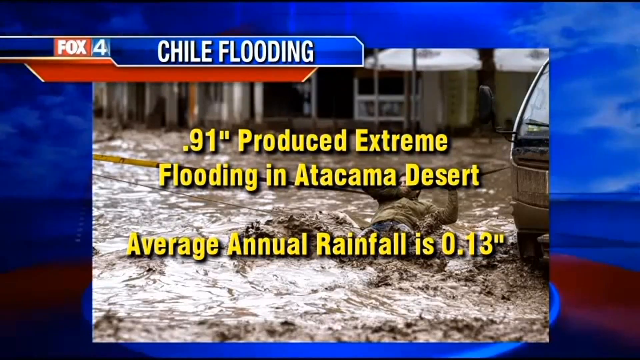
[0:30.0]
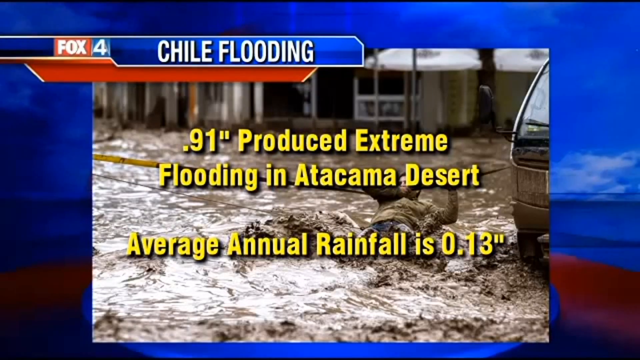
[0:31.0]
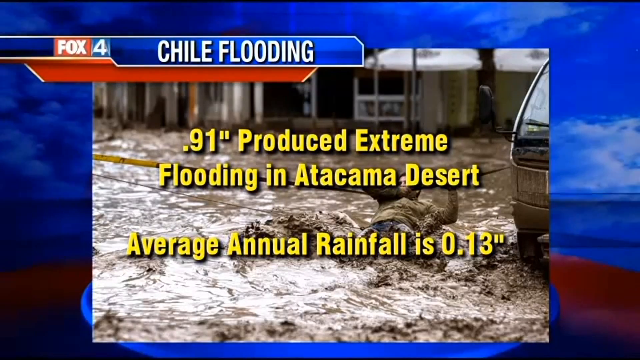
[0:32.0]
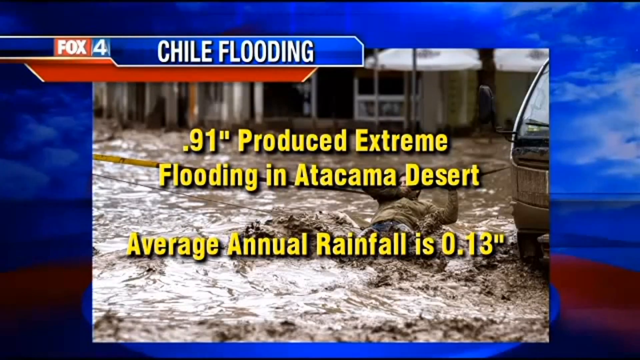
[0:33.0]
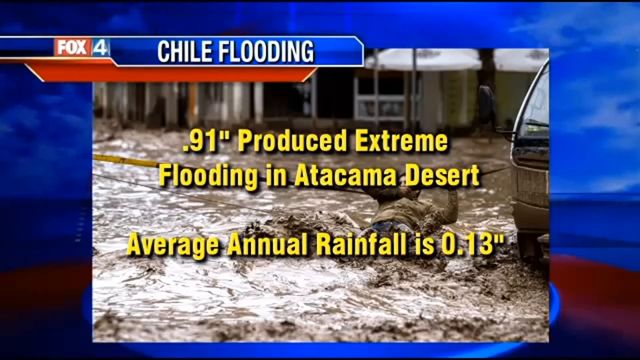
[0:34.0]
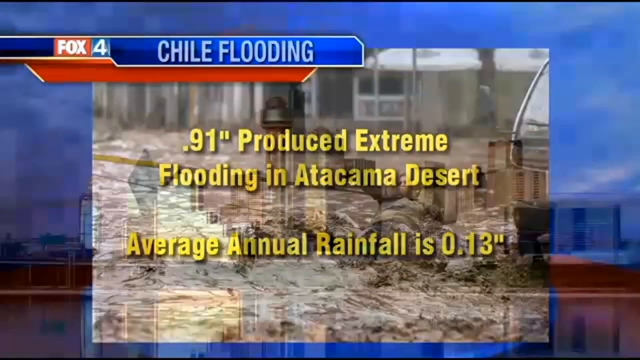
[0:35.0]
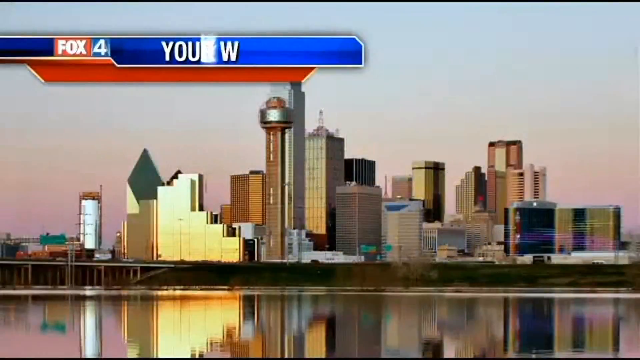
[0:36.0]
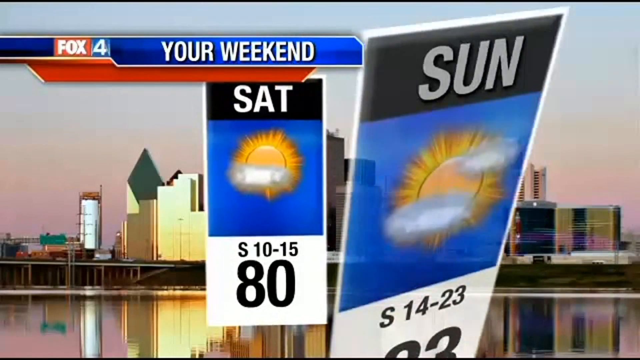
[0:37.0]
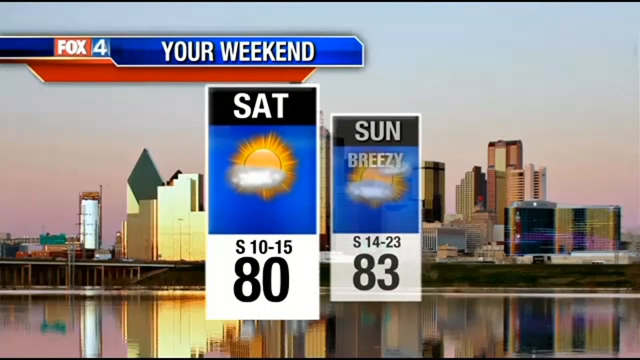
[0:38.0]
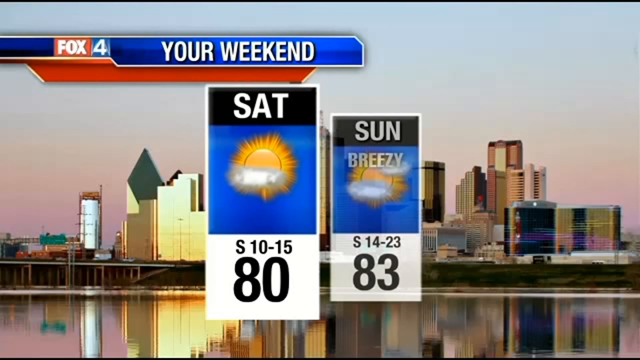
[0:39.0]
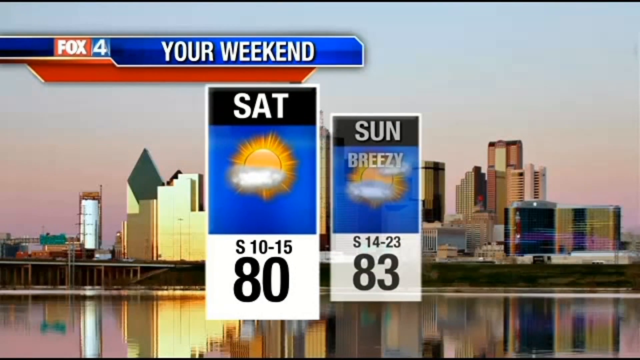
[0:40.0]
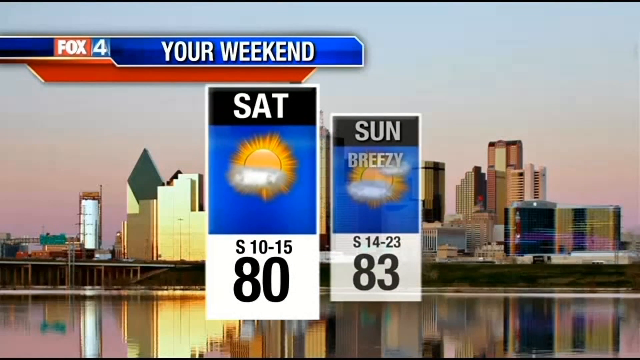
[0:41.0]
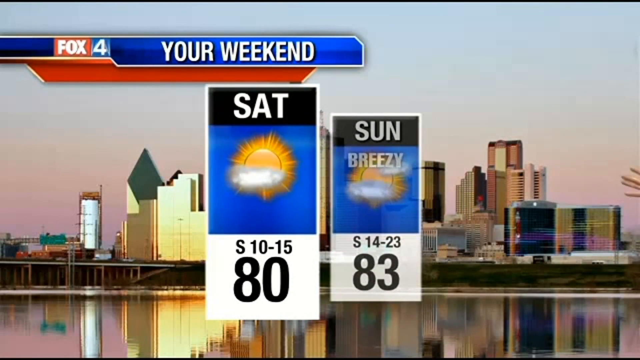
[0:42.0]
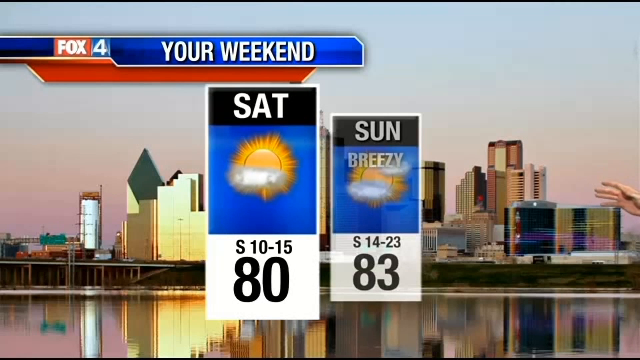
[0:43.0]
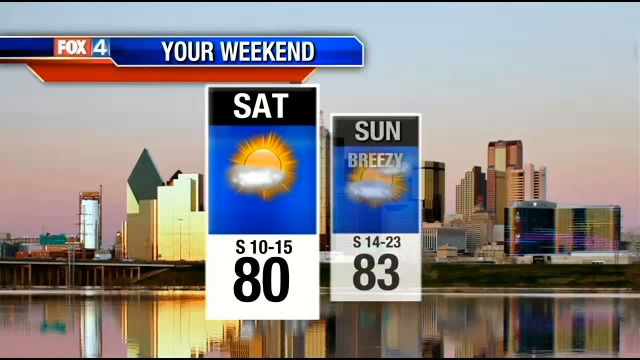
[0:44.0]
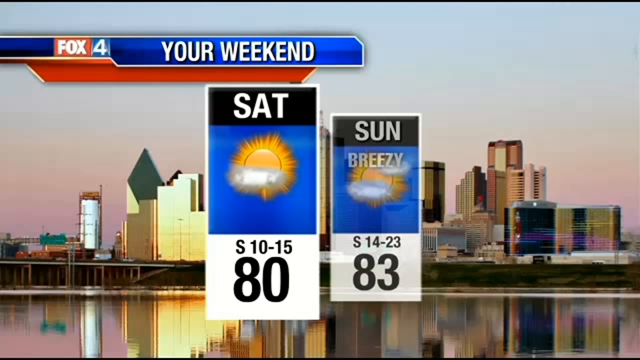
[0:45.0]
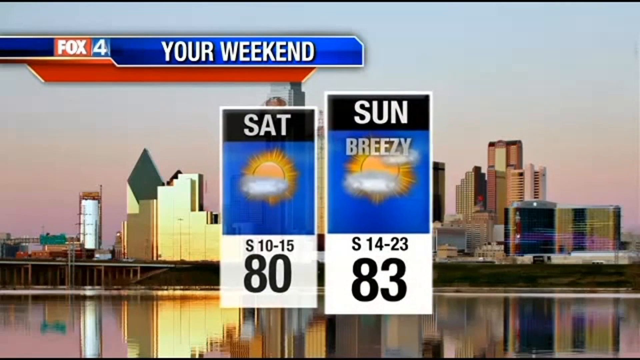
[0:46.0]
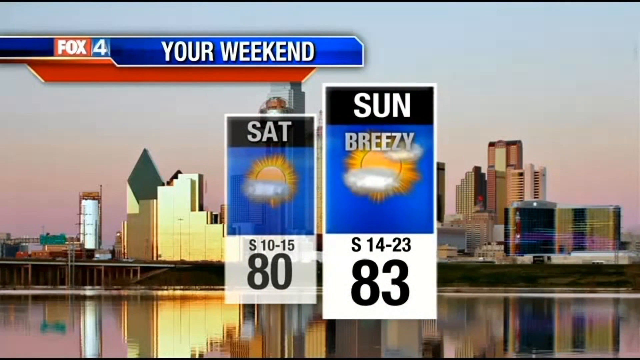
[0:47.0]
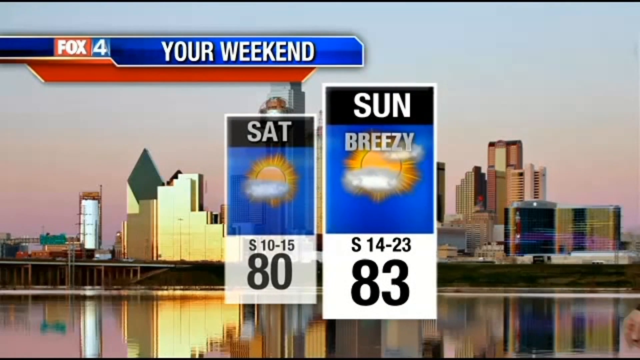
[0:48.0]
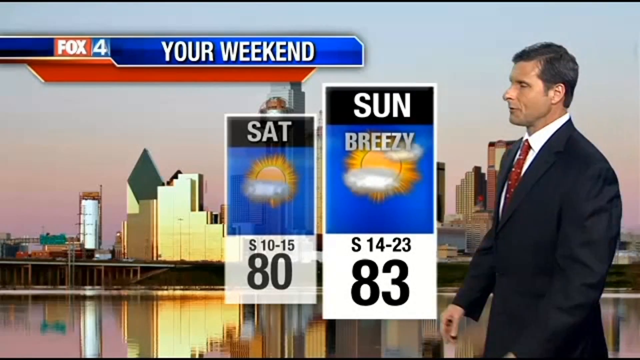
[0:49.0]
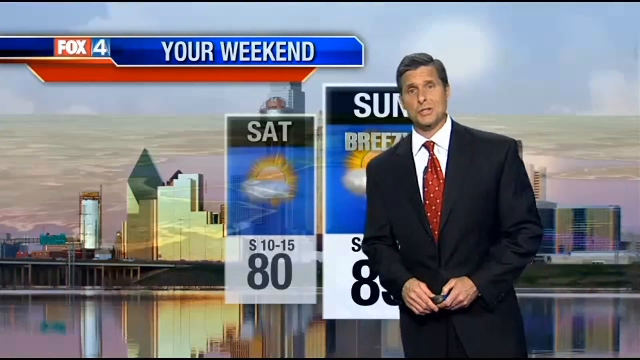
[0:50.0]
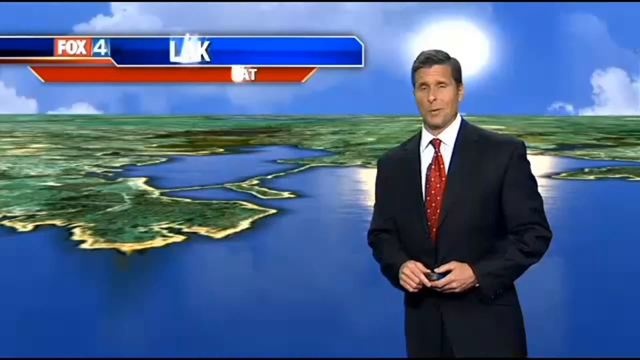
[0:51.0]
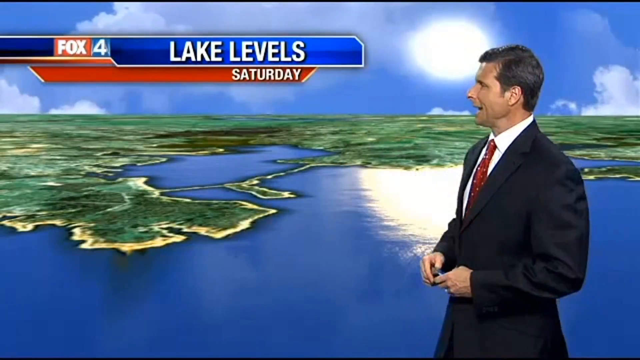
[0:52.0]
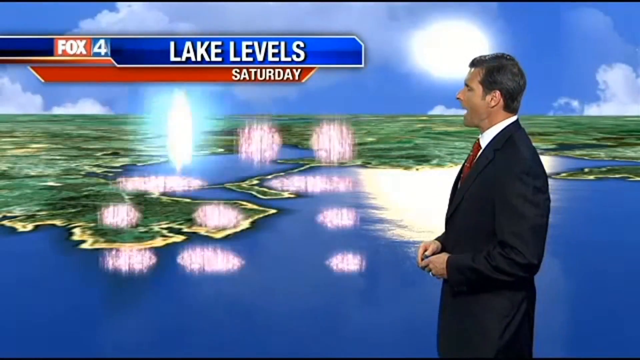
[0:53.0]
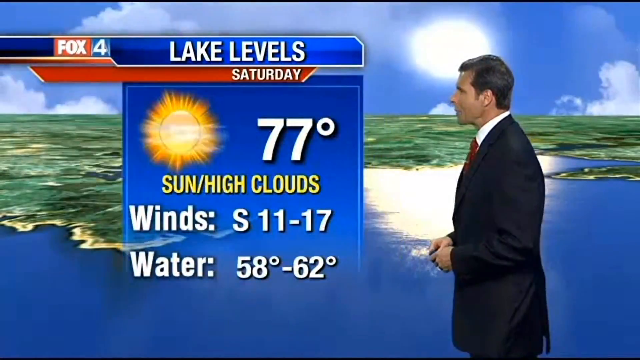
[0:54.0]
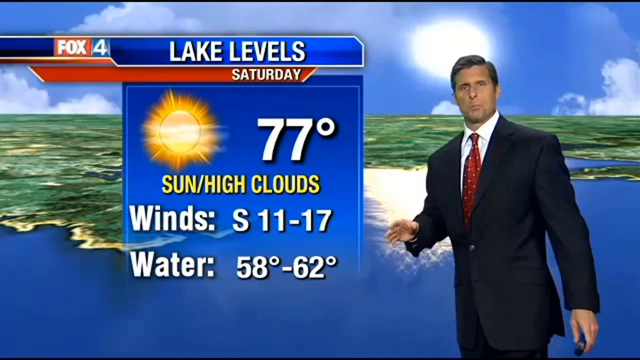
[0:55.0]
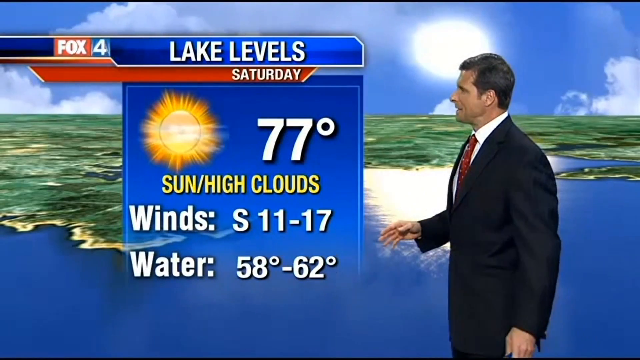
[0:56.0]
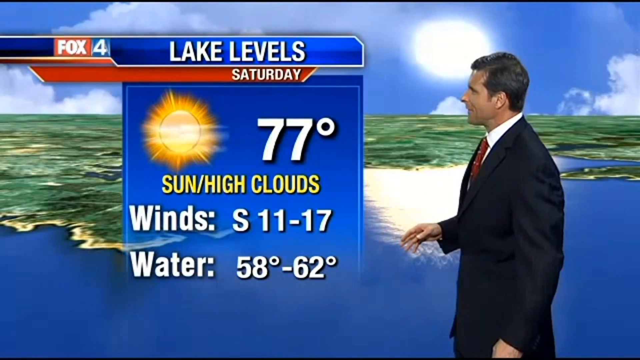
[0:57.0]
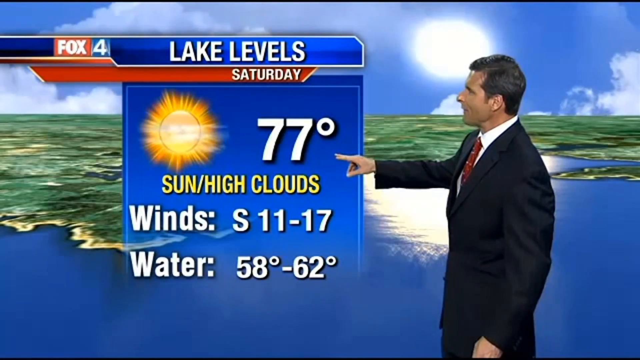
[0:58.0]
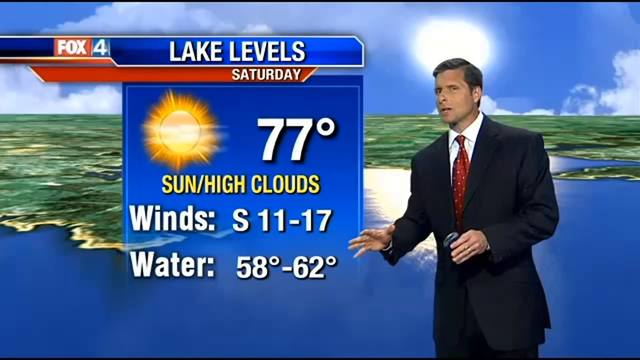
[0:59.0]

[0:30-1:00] An image appears to show a flood. A rope seems to be attached to some kind of van on the right side and extends all the way to the left, continuing past the left edge of the screen. A guy hangs from the rope as floodwater comes down; the water looks muddy and dirty, half of his body is immersed in it, and he looks completely covered in dirty water. Yellow text in the foreground reads ".91 produced extreme flooding in Atacama Desert, average annual rainfall is .13". The video cuts to a cityscape and shows the weather for Saturday and Sunday. Under the "SAT" text for Saturday there is a cloudy sky and "80". To the right, white text reads "sun" for Sunday, with "breezy" under it, cloudy skies with the sun behind them, and "83". Someone's hand appears from the right side of the screen, and white text at the top reads "your weekend". A person emerges from the right side of the screen, walks toward the middle and starts to talk. As he does, the background changes to what kind of looks like a computer-generated image of a coast, and graphics appear reading "lake levels" and "77 degrees", showing the winds and the water temperature.